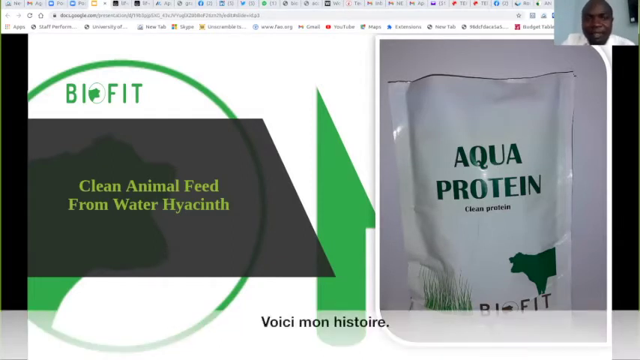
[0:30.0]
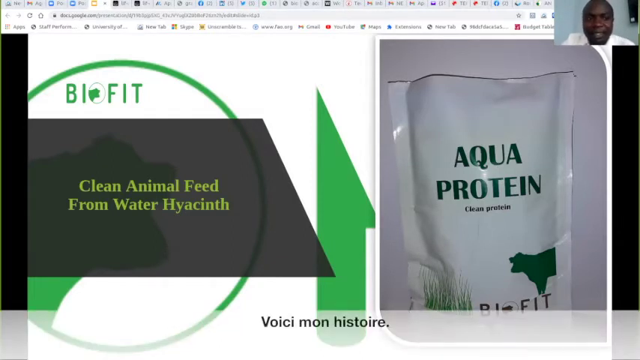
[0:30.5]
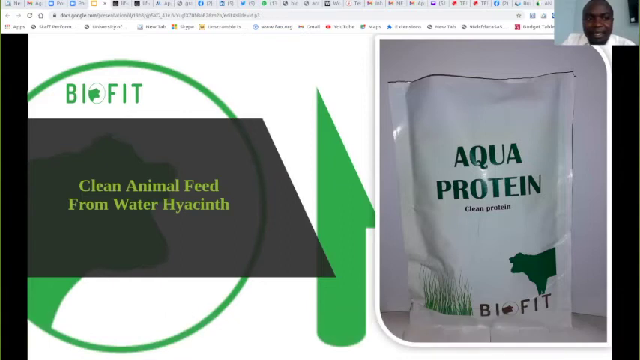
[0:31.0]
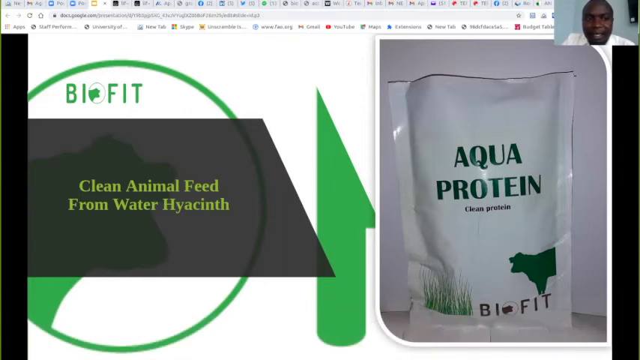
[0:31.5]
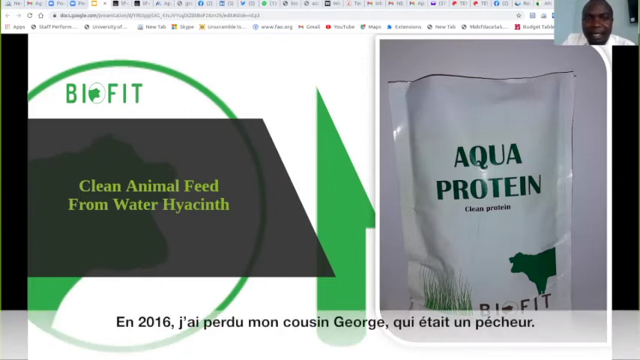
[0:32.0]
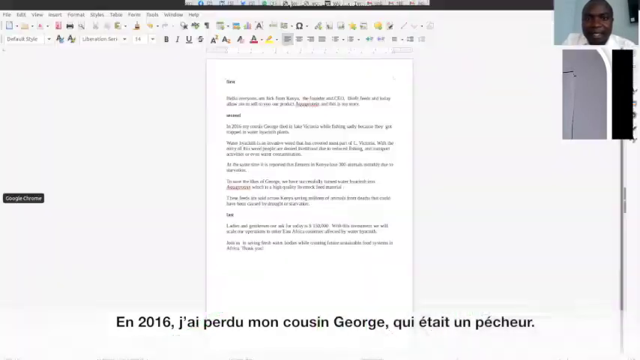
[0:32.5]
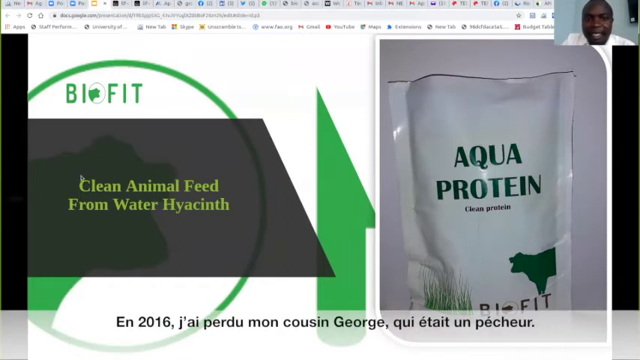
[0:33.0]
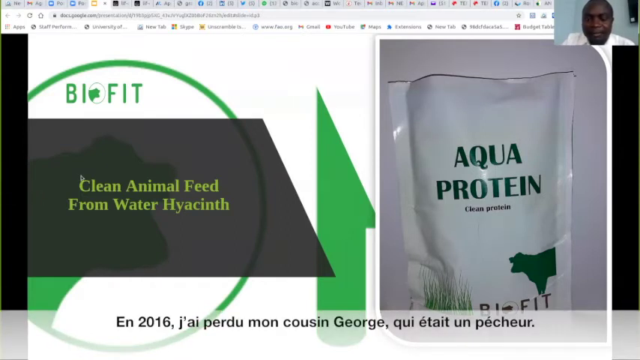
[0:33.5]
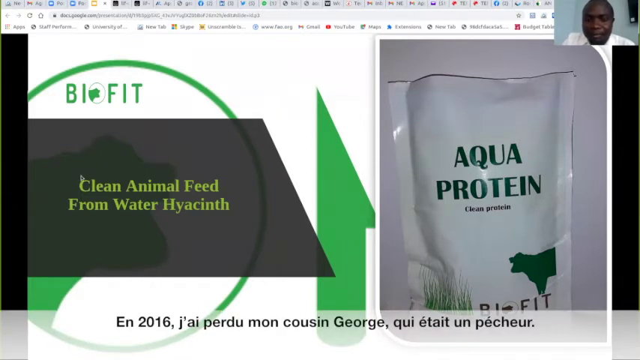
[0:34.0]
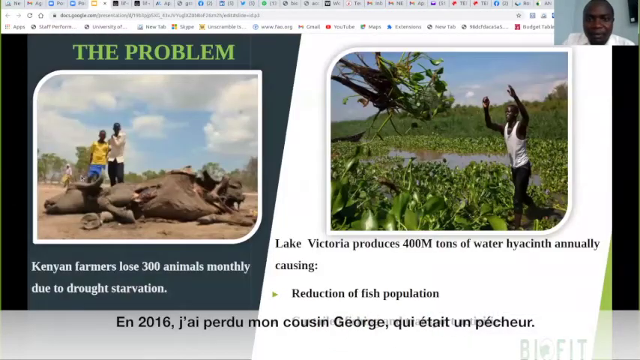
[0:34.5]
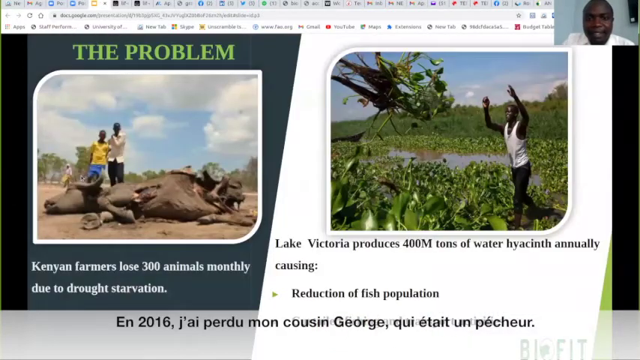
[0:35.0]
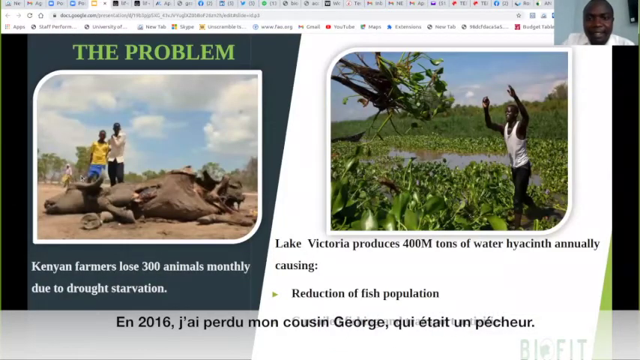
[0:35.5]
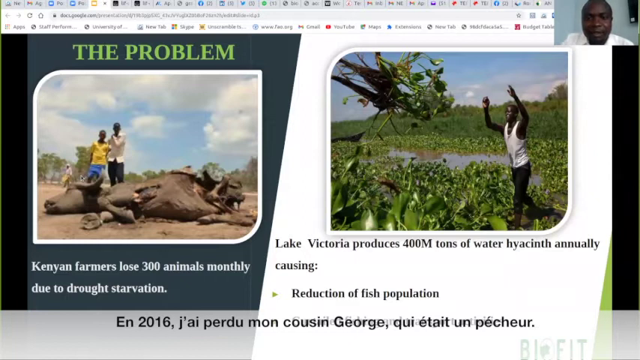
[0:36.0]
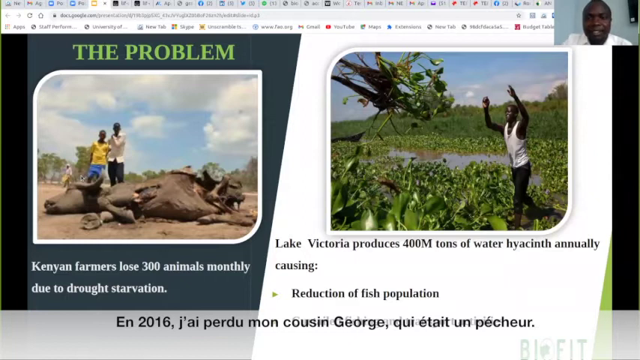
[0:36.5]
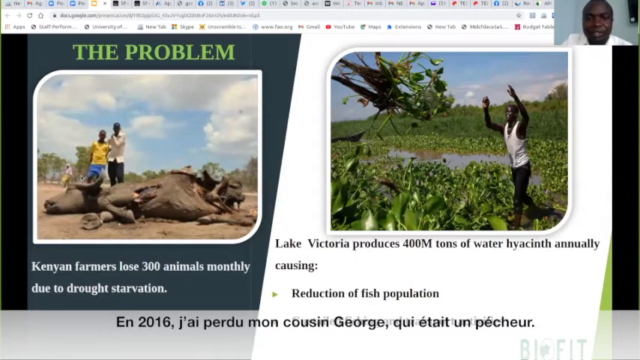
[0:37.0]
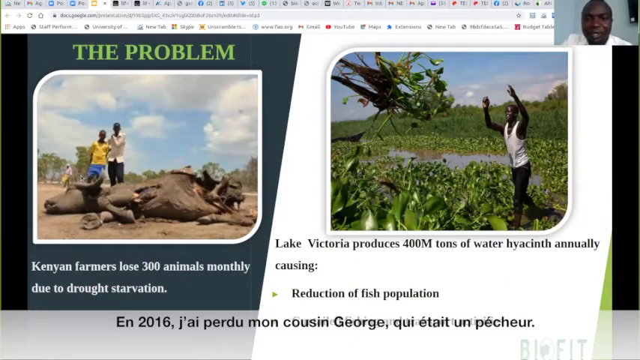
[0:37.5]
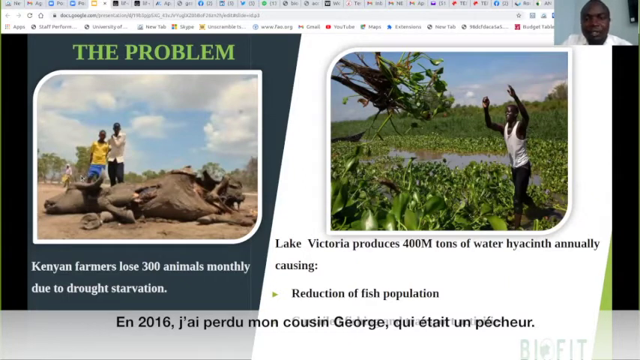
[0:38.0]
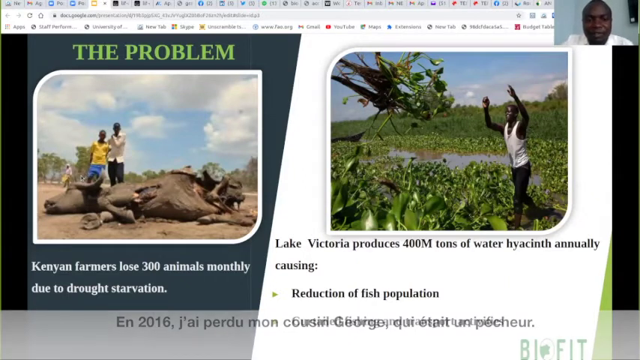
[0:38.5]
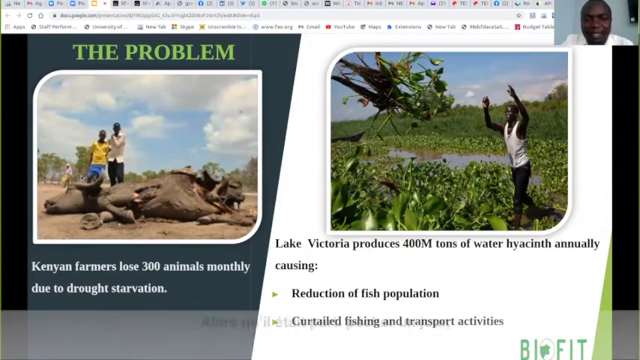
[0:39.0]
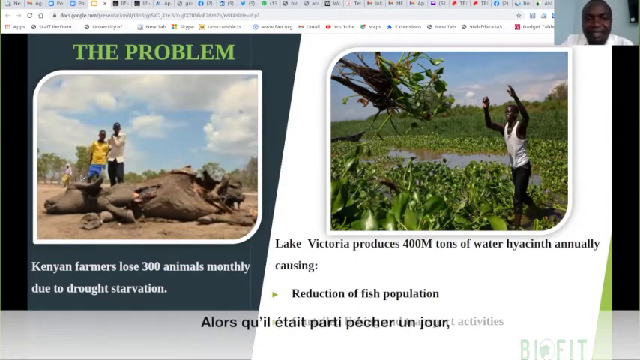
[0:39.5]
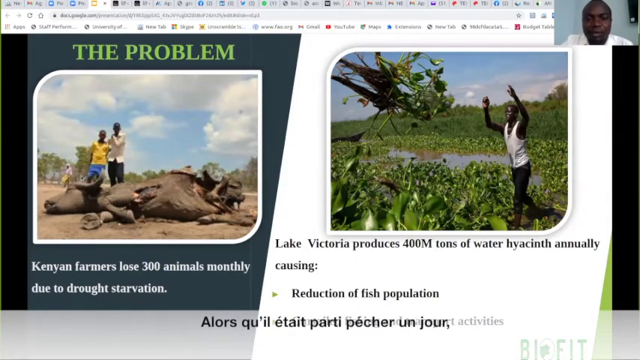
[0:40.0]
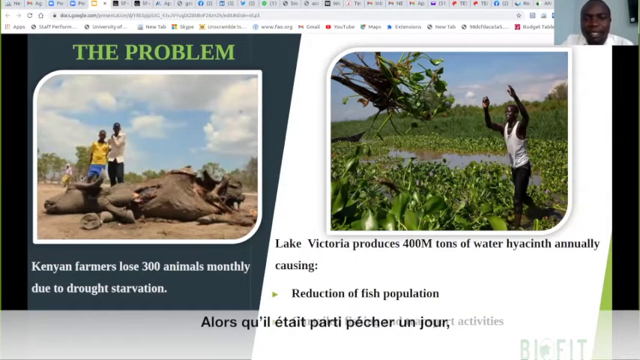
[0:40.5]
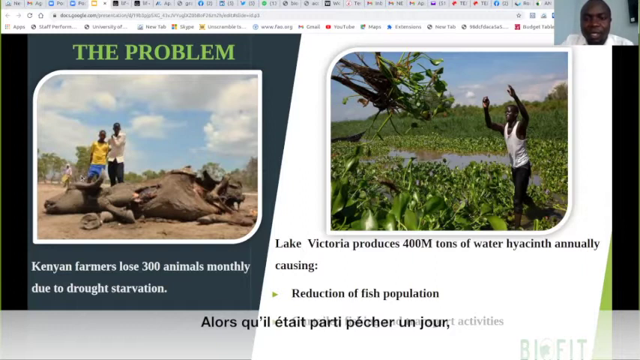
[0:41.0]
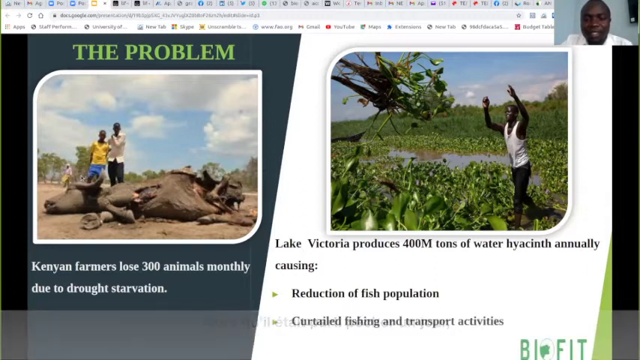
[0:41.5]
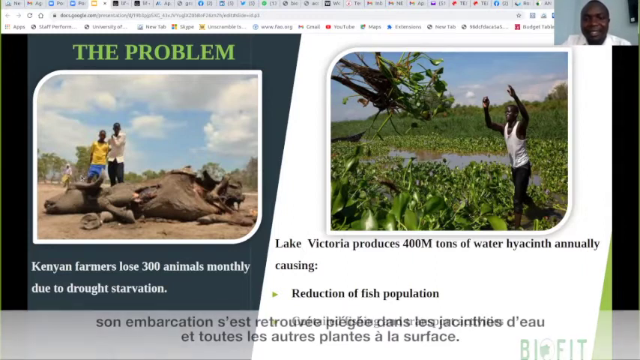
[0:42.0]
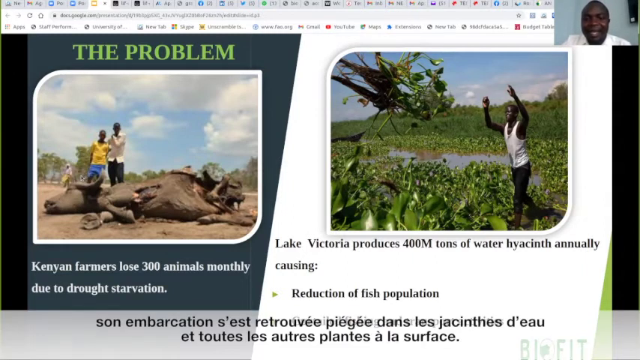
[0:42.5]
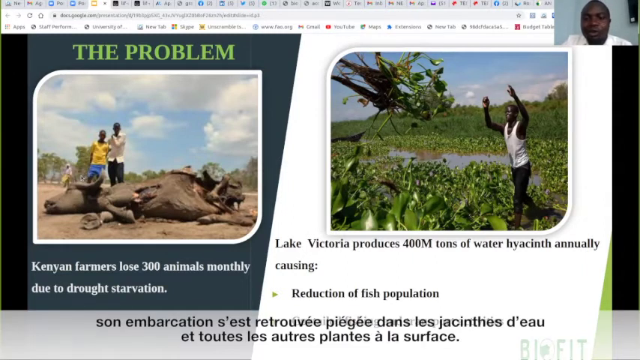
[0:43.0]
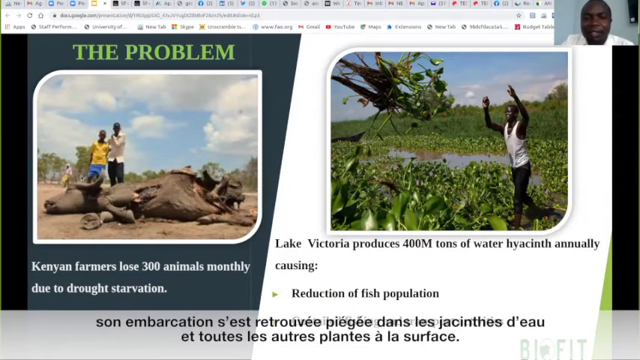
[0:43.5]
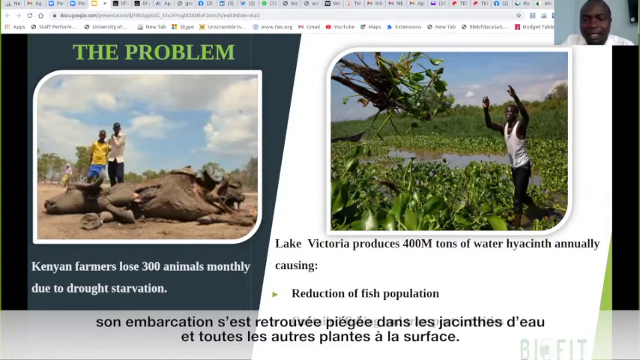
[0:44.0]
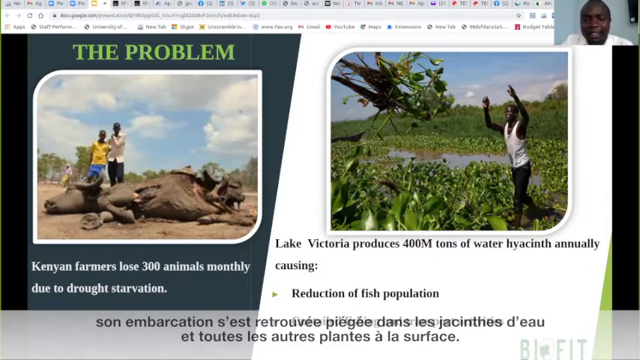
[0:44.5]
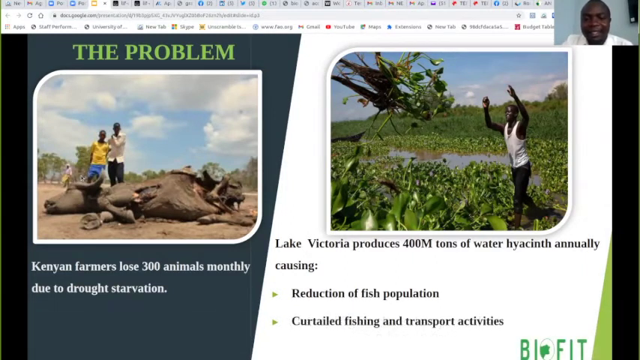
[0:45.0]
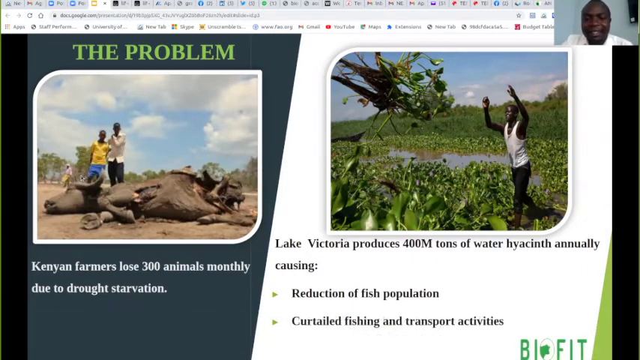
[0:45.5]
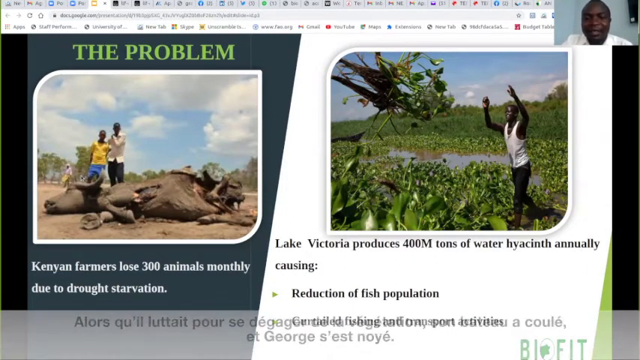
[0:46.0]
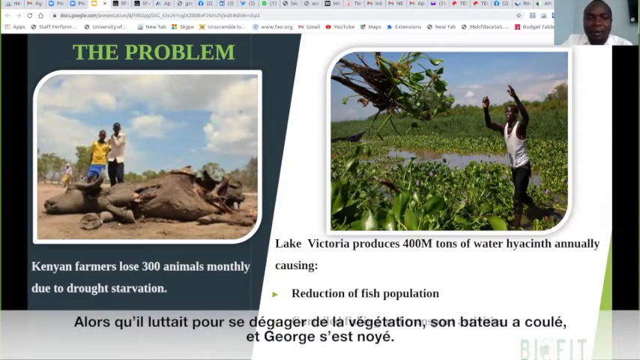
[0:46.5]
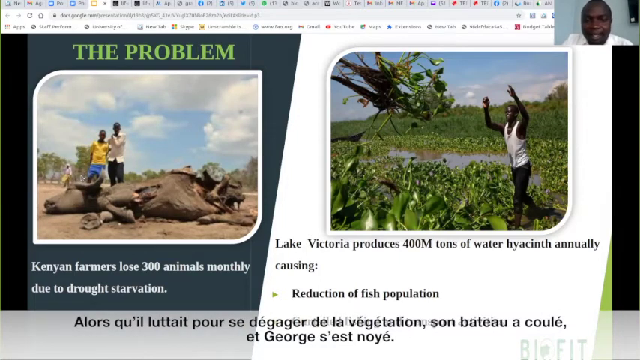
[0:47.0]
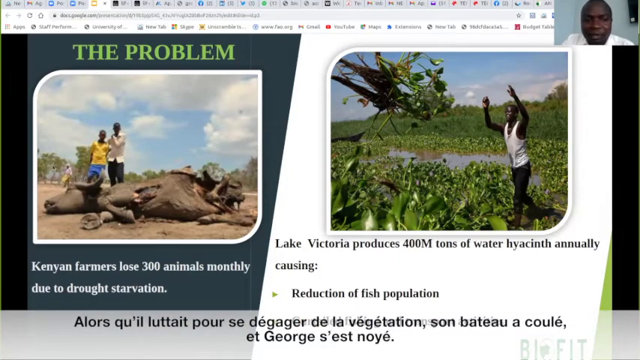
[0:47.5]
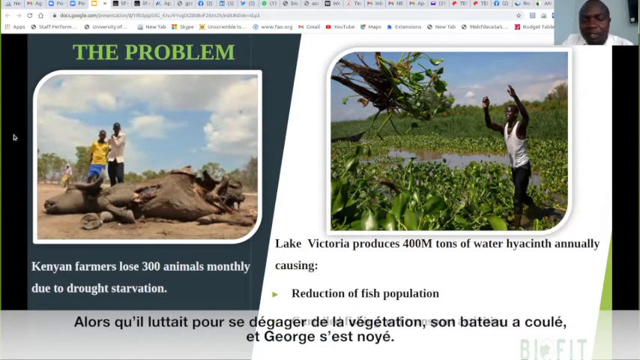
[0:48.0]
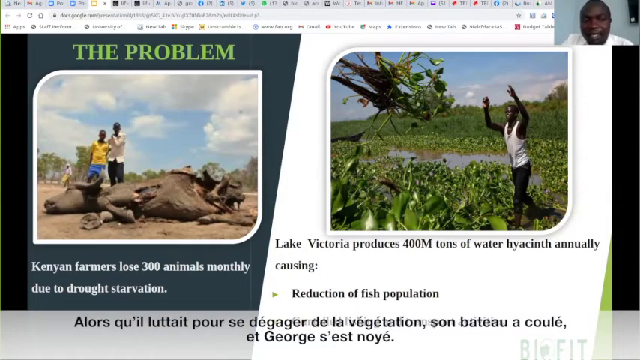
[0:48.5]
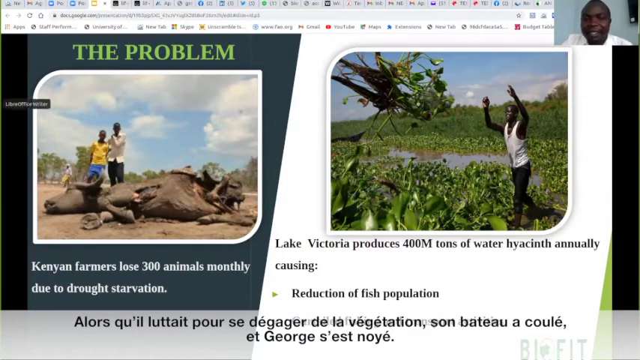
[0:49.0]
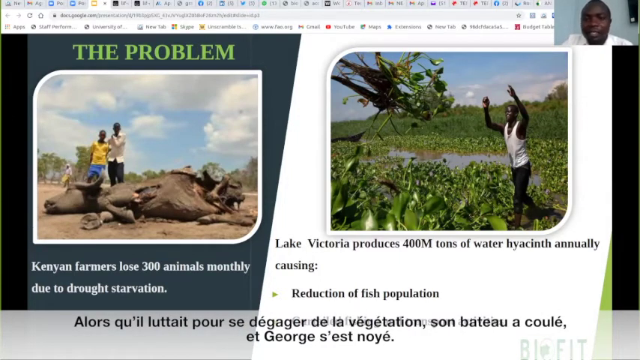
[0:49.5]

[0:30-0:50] The video continues from the man, moving on to the problem in Kenya. This part is written in English: text at the top reads that "Kenyan farmers lose about 300 animals monthly due to drought starvation", while the text at the bottom of the page is in French. A picture at the top shows what looks like a large water buffalo that has died of starvation, with some people standing behind it. Text also states that Lake Victoria produces 400 million tons of water hyacinth annually, causing a reduction in the fish population, along with the words "Clean animal feed from water hyacinth".